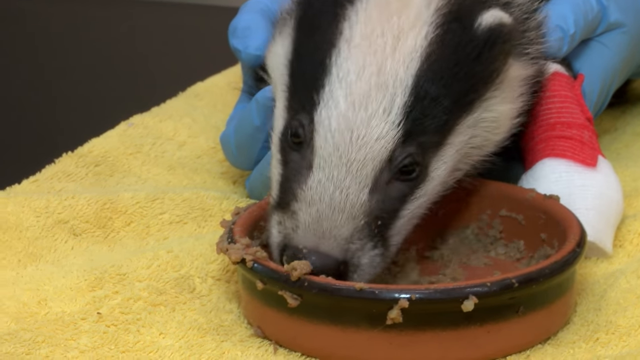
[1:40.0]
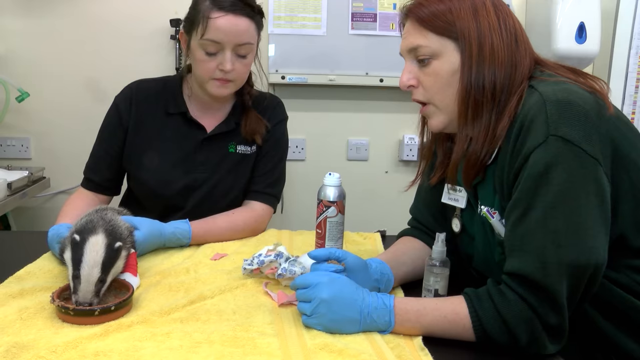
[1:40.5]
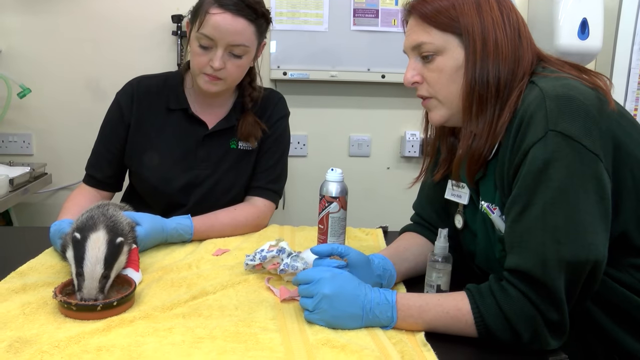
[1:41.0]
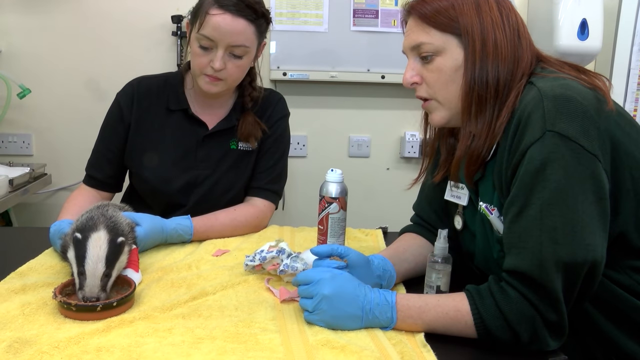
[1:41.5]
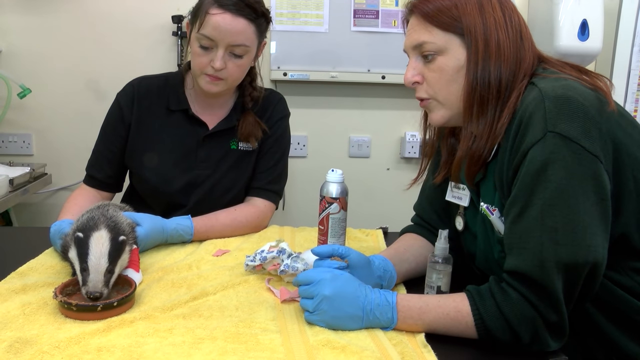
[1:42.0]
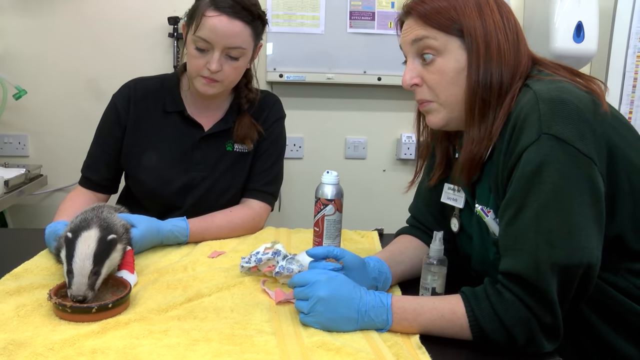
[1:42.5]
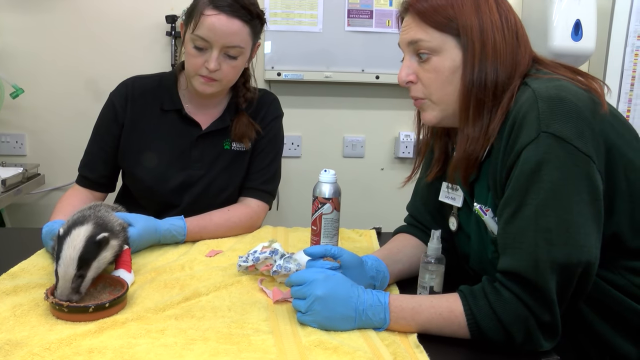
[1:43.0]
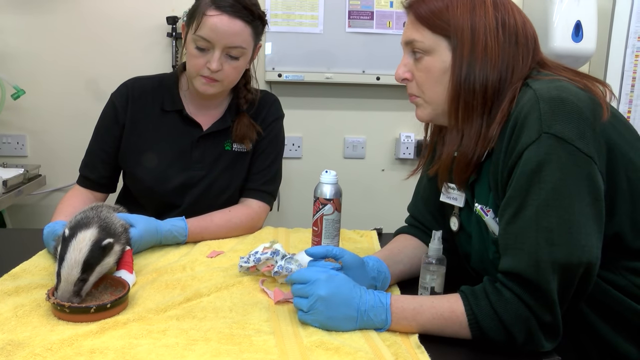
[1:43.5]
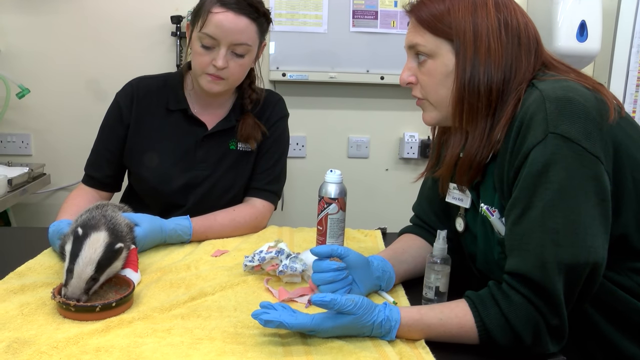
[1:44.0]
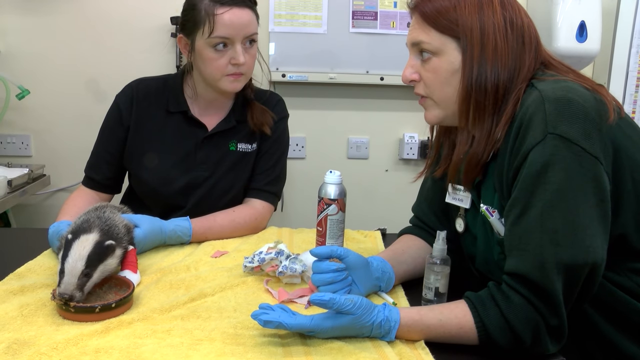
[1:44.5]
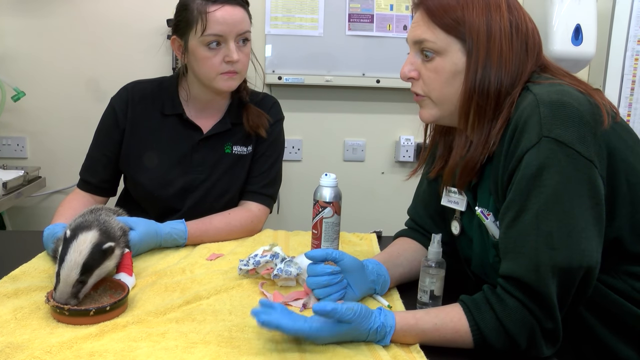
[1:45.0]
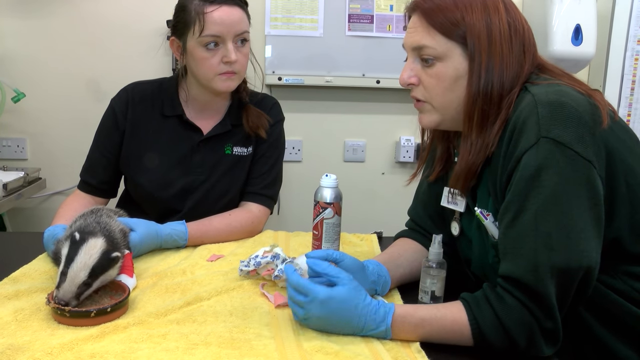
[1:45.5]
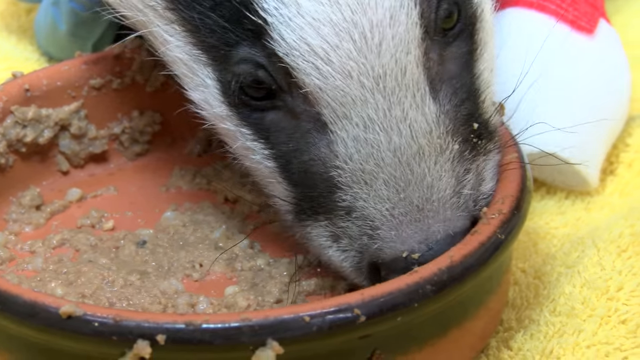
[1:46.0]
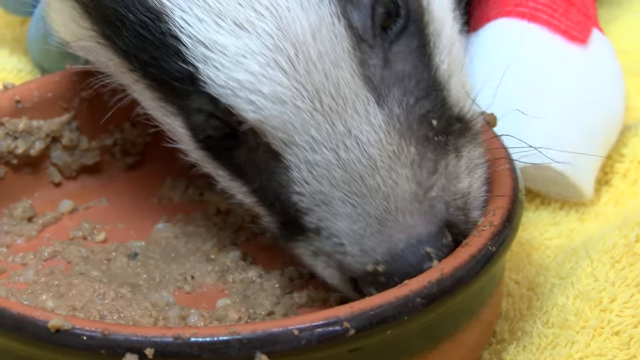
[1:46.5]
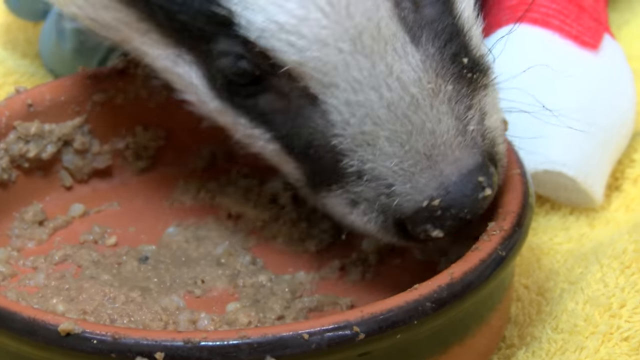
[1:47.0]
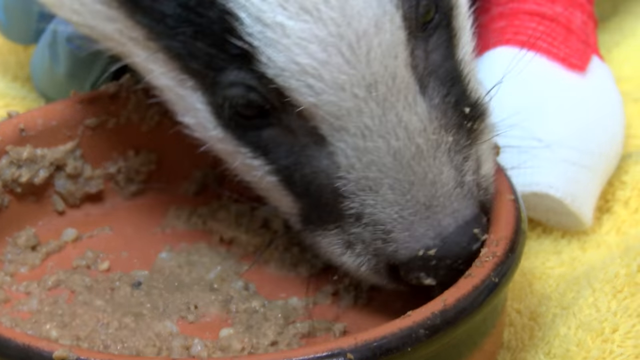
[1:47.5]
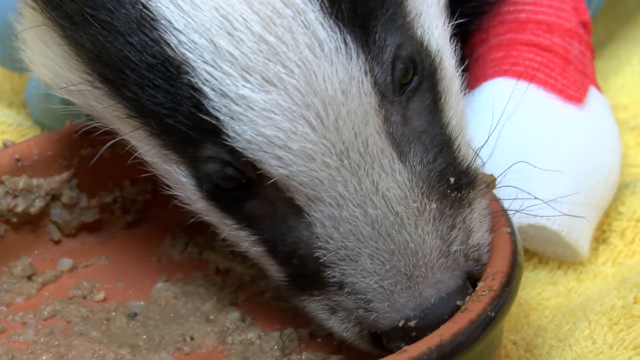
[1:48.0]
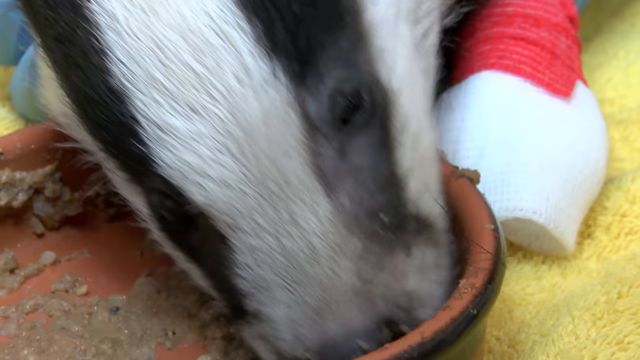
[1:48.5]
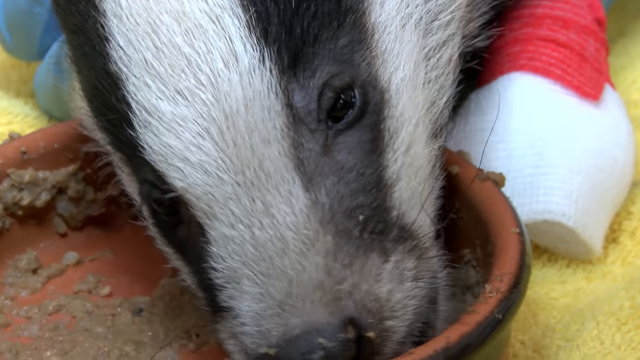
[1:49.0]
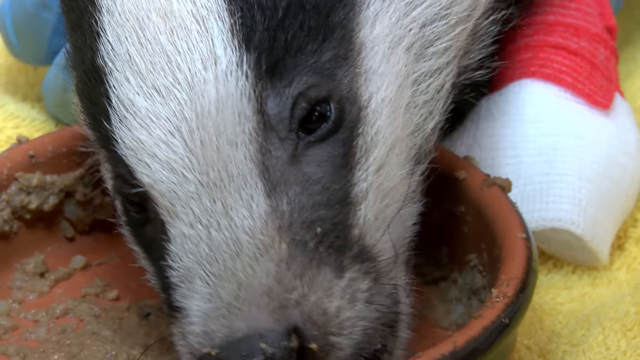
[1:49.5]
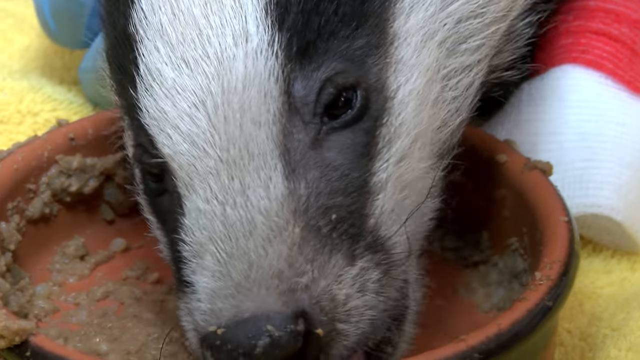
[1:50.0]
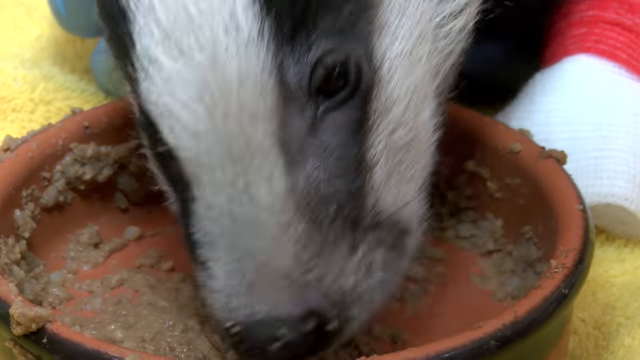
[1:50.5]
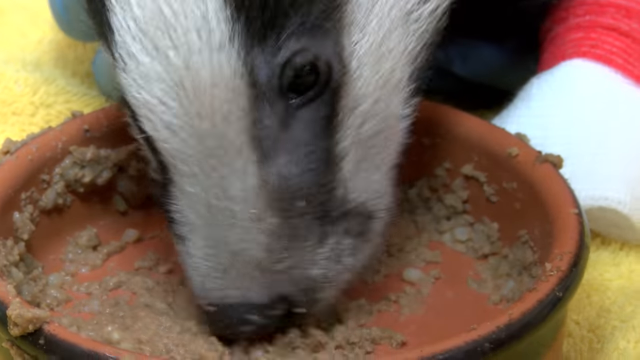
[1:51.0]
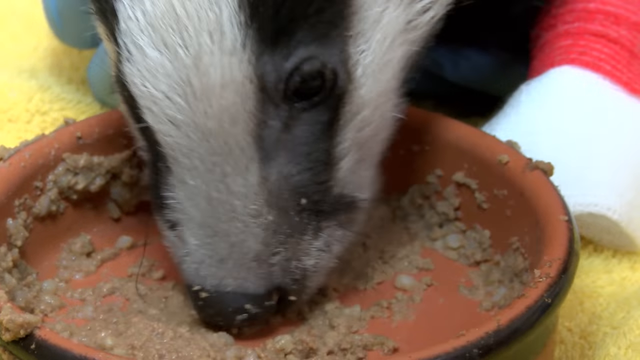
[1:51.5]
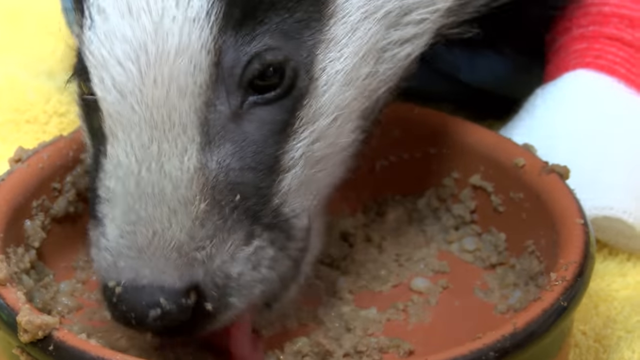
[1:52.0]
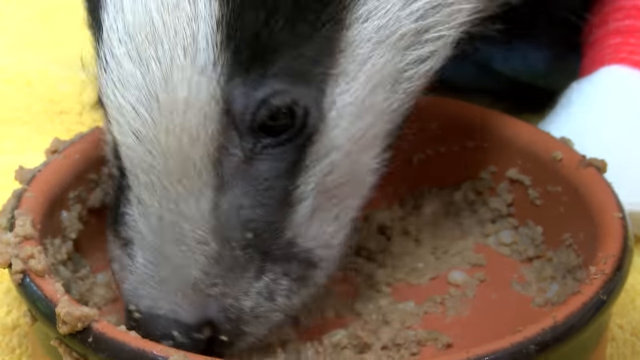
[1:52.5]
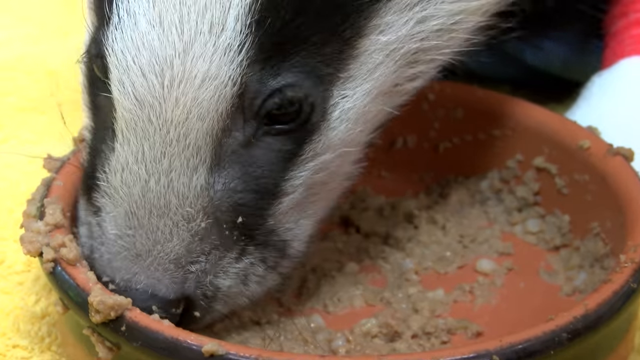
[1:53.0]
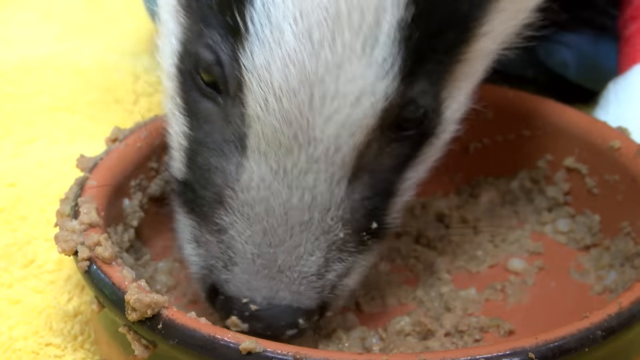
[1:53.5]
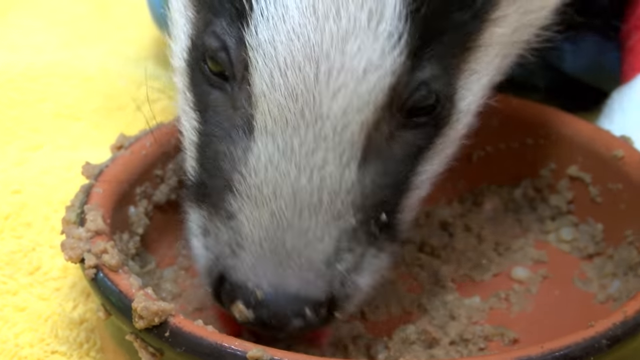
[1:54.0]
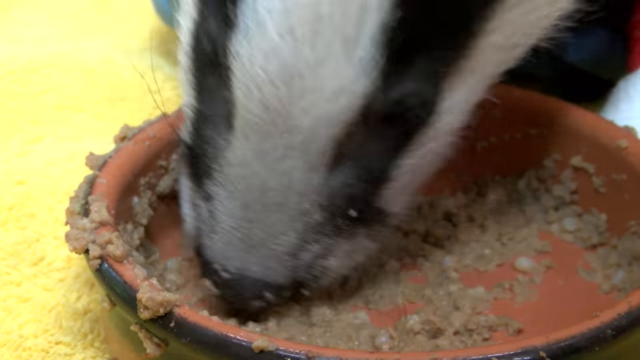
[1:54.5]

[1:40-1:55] A close-up shows the badger eating what looks like wet food out of a low bowl. There is food on his nose, his fur and his whiskers. The camera pans over to the badger, showing his bright eyes and fur. It looks like he may have another wrapping on one of his legs: a red bandage, not a cast.